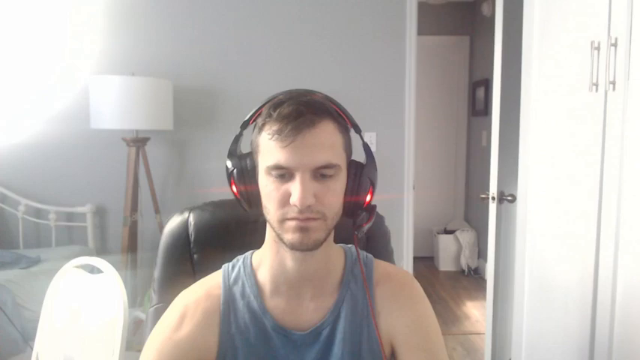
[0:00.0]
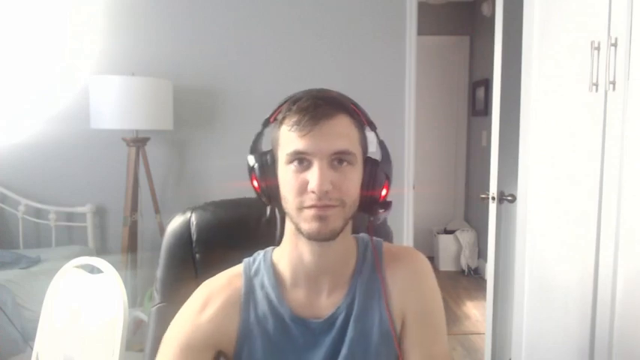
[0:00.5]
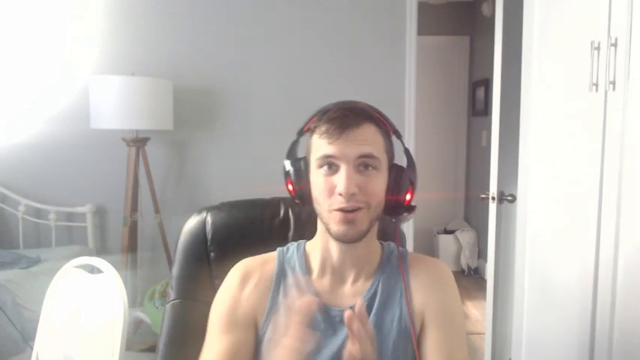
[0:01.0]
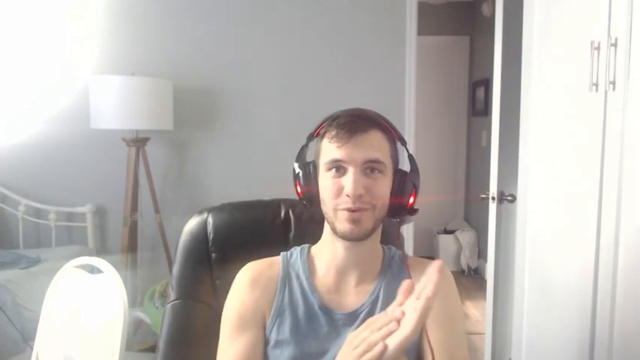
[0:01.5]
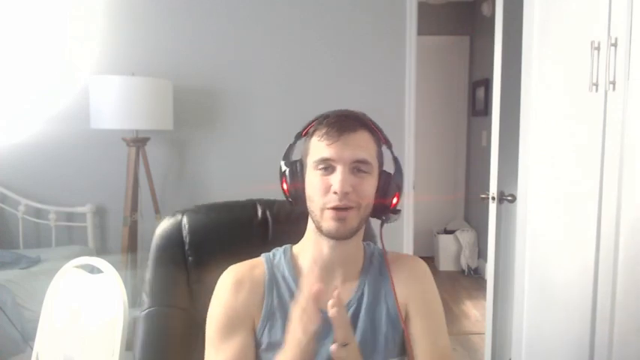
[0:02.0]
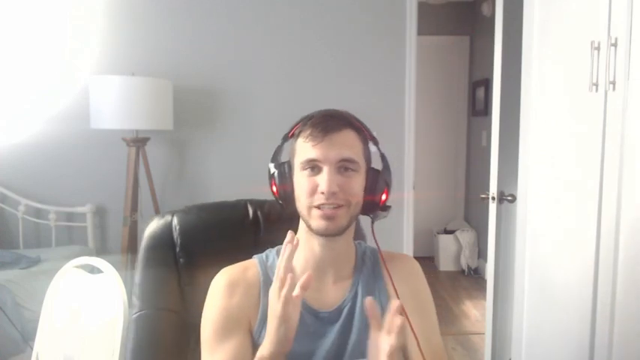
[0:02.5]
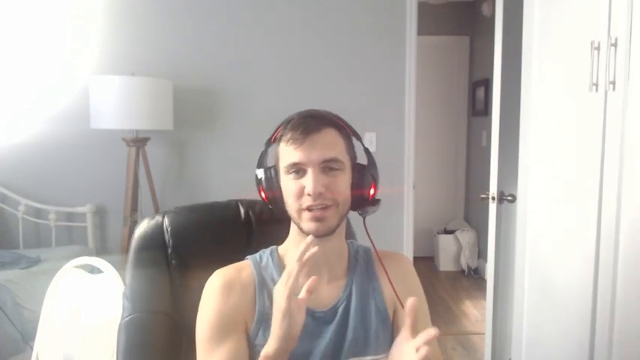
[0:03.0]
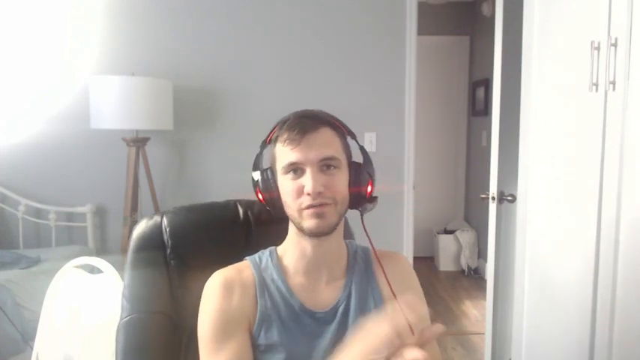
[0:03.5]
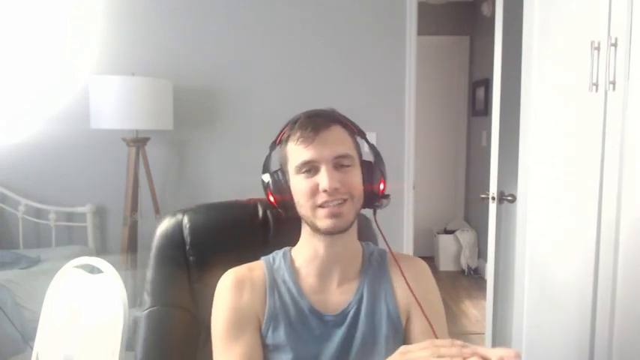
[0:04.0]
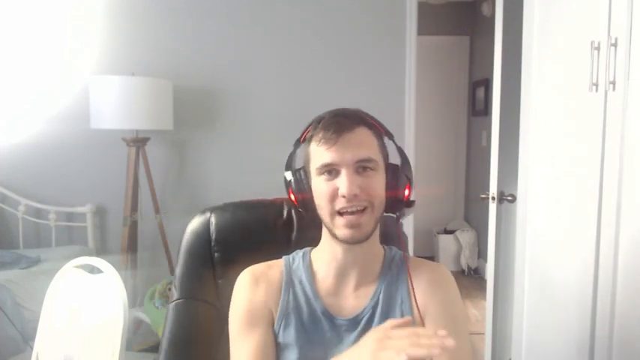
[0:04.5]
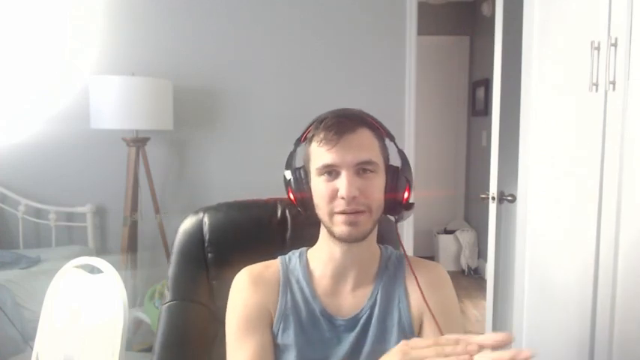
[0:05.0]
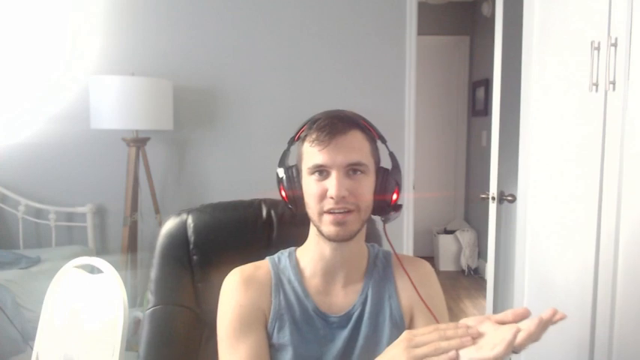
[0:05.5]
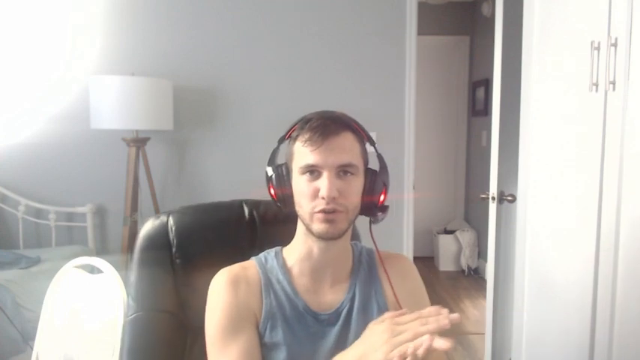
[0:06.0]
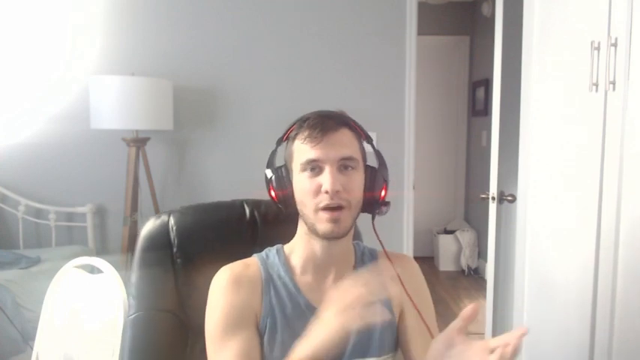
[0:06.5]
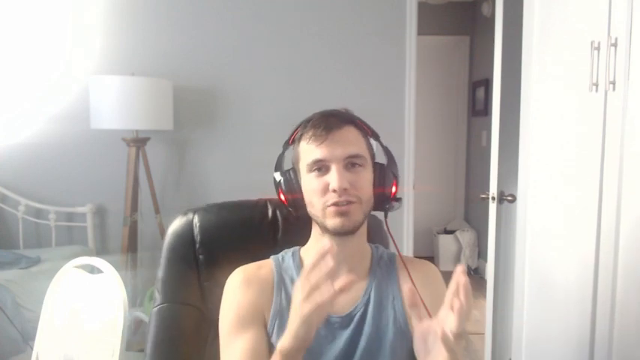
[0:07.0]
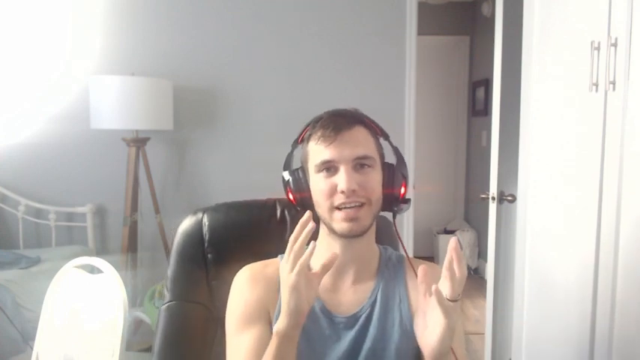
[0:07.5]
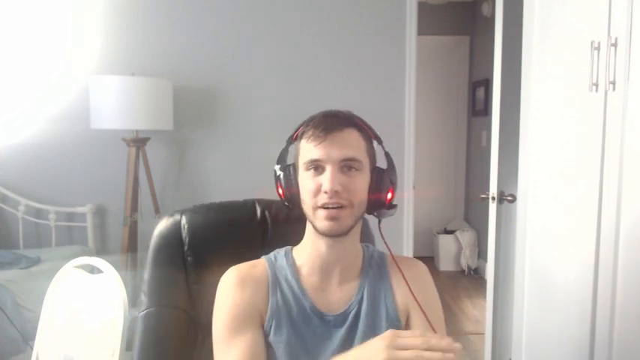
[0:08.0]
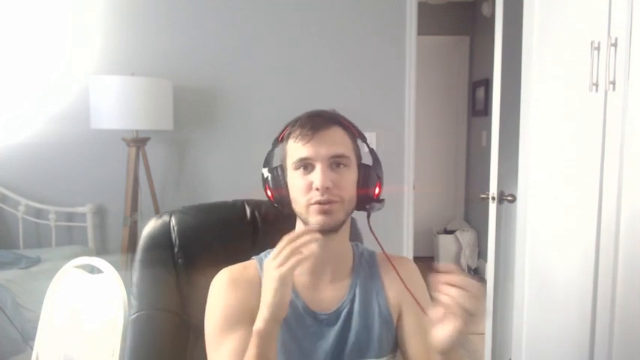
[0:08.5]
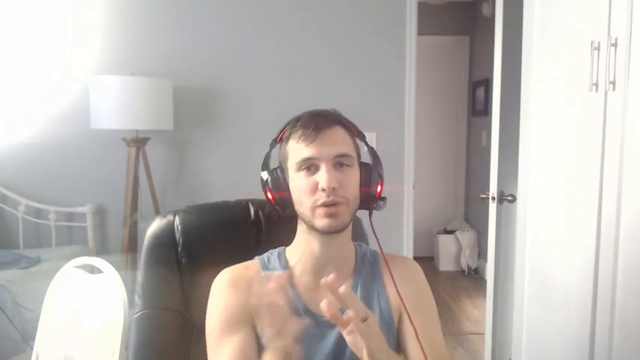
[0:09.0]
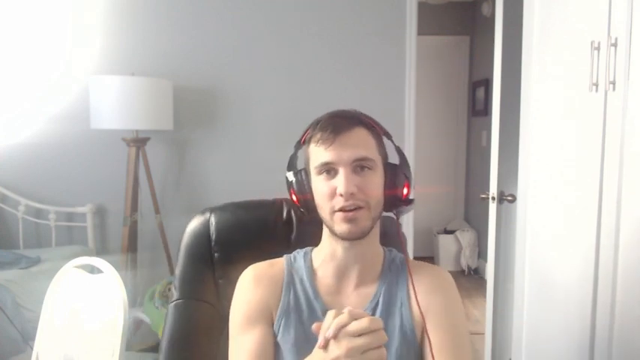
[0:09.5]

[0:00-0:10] A young white man with short brown hair and a little stubble around his chin and jaw speaks directly into what looks like a webcam, apparently from his bedroom. He wears a blue tank top and is seated in what looks like a black leather chair. As he speaks into the camera, he rocks back and forth and gestures with his hands.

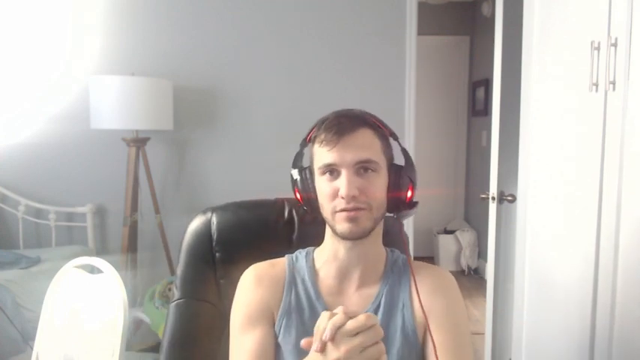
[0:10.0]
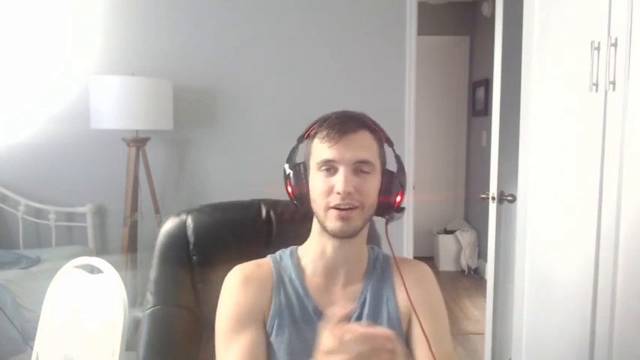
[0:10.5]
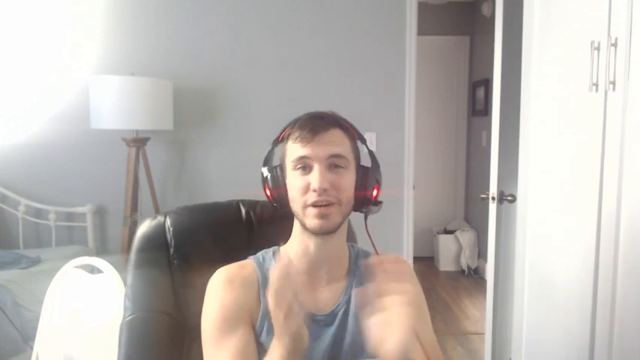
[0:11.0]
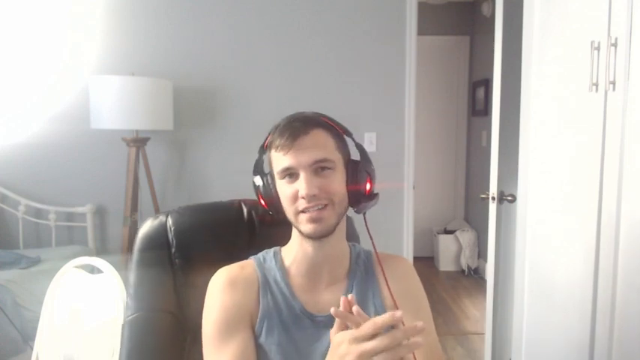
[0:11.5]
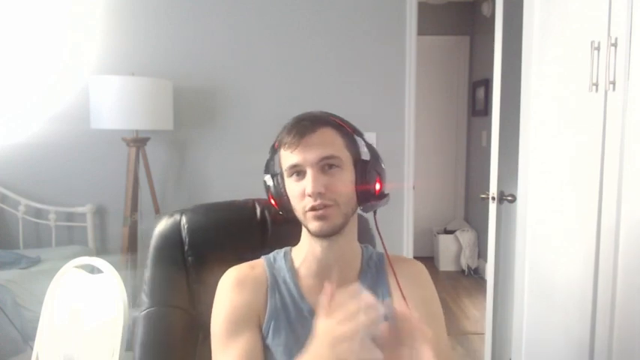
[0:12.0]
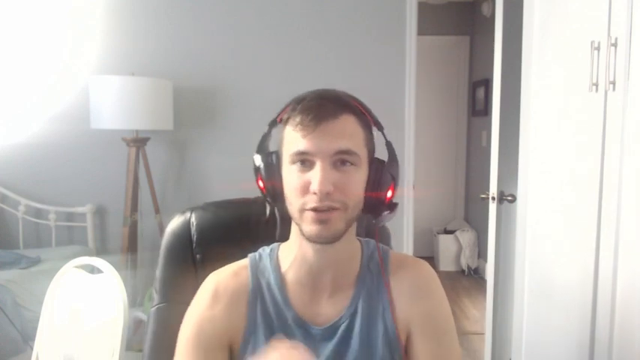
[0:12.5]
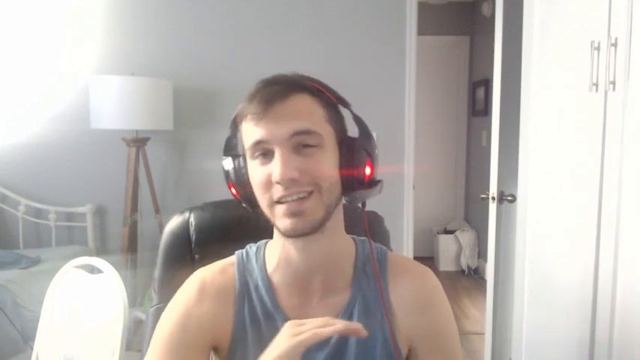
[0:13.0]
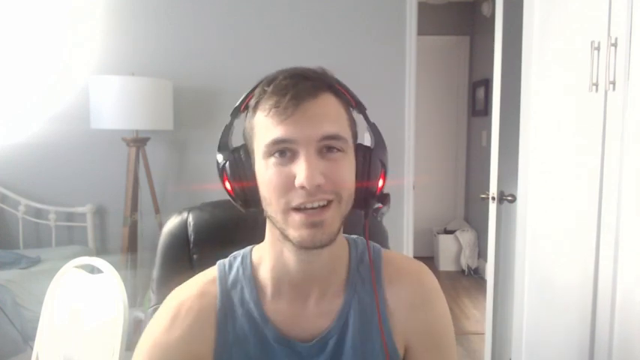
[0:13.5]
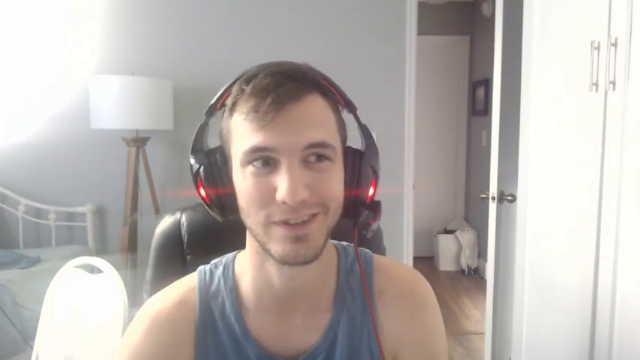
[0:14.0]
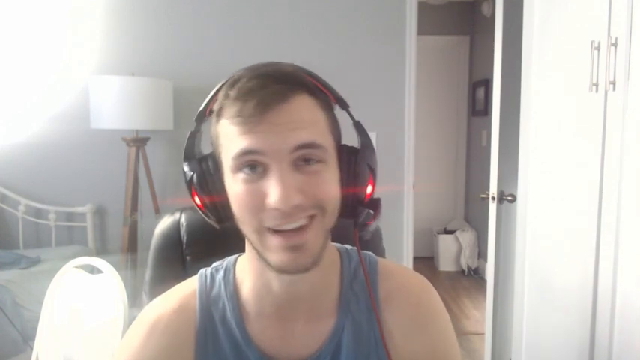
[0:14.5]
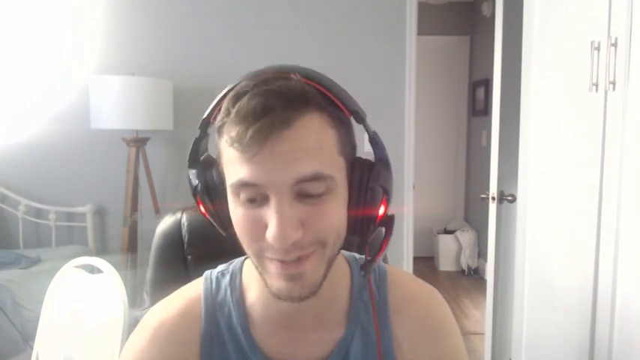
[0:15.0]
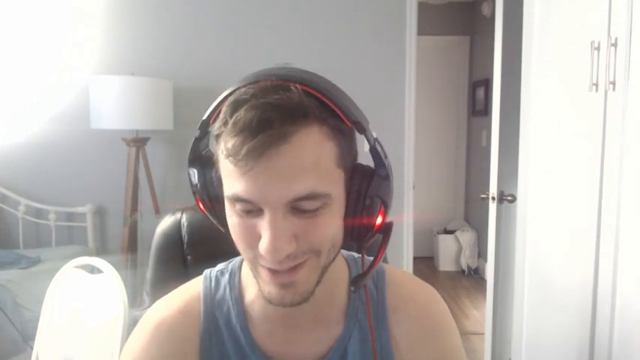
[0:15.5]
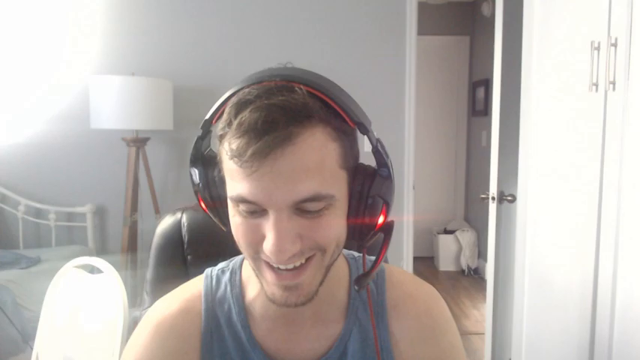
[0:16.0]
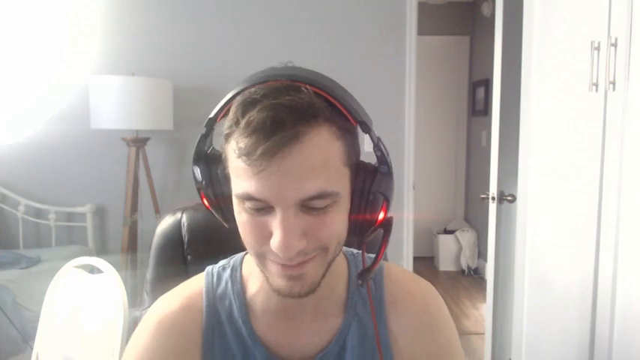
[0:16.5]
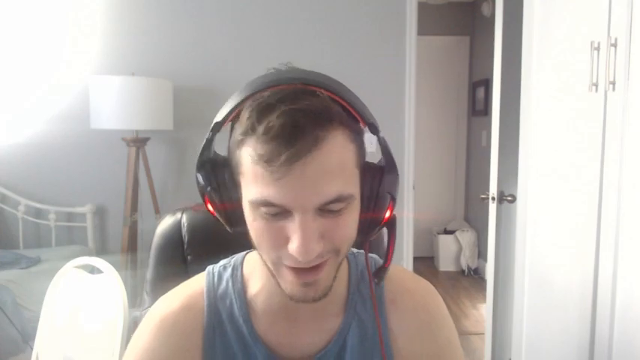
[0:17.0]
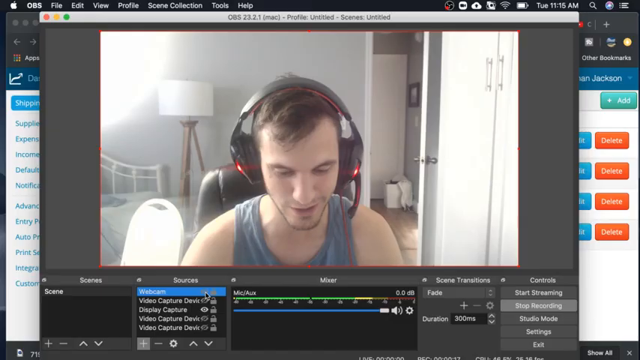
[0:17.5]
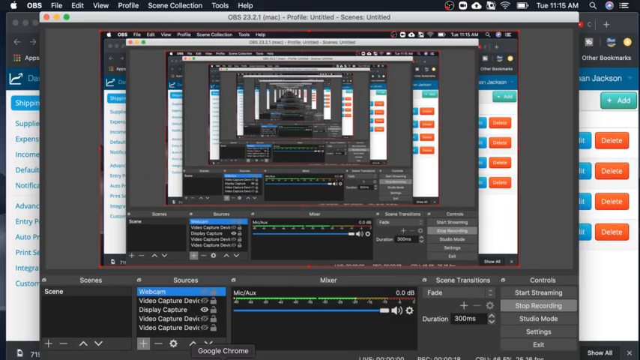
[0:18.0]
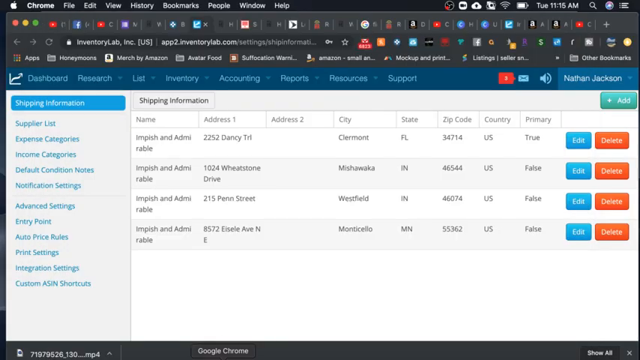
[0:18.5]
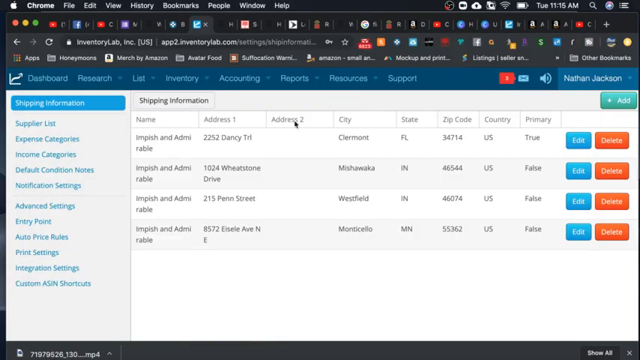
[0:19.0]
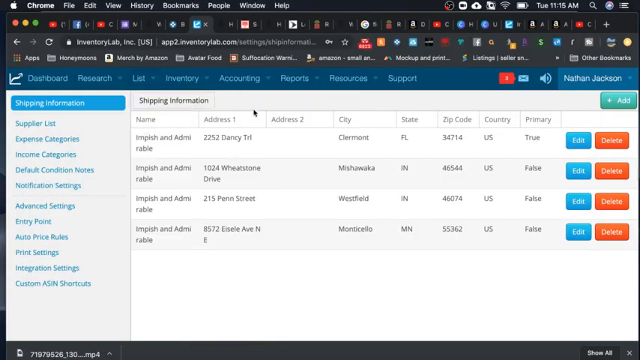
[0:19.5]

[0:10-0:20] The man leans forward, getting a little closer to the camera. He is still speaking but uses his hands less. He wears headphones, with a red light coming from each side and from the top, and on the left side what looks like a little microphone peeks out. He hits something on the computer, and a series of mirrored images of a window appears as he gets smaller, in what kind of looks like a portal. Then what looks like an Apple interface appears: the Apple Safari web browser.